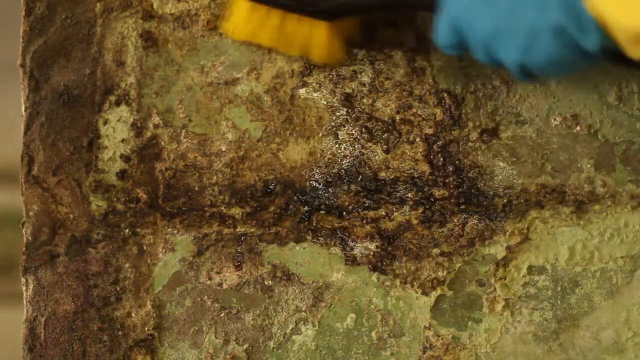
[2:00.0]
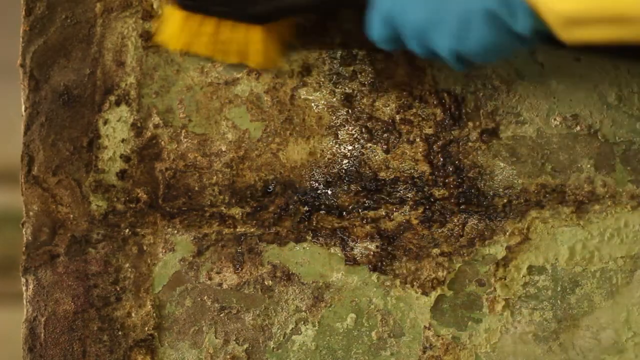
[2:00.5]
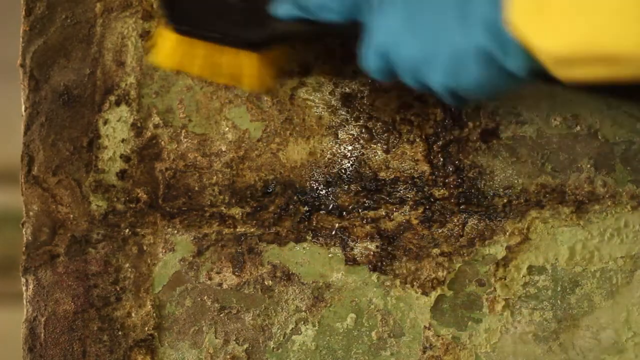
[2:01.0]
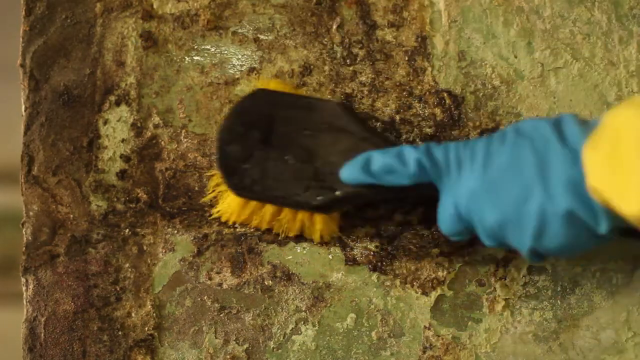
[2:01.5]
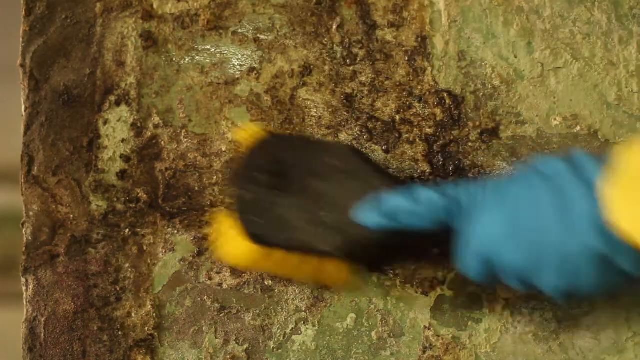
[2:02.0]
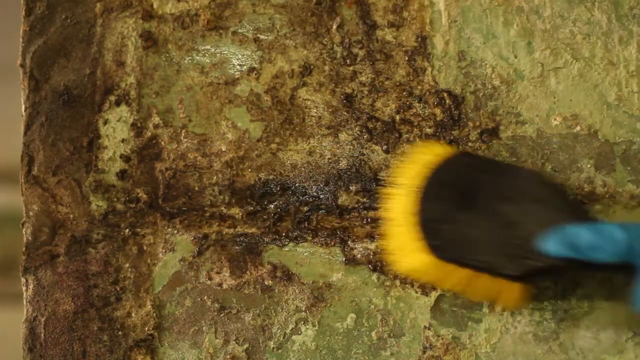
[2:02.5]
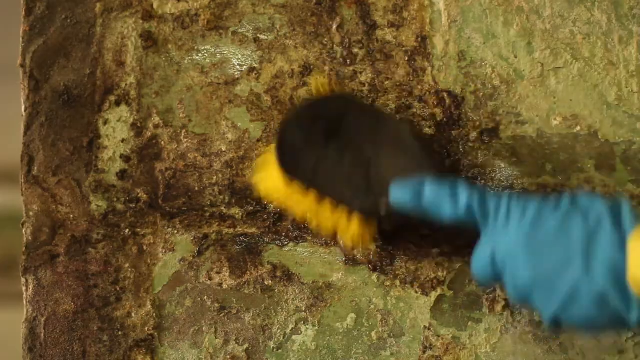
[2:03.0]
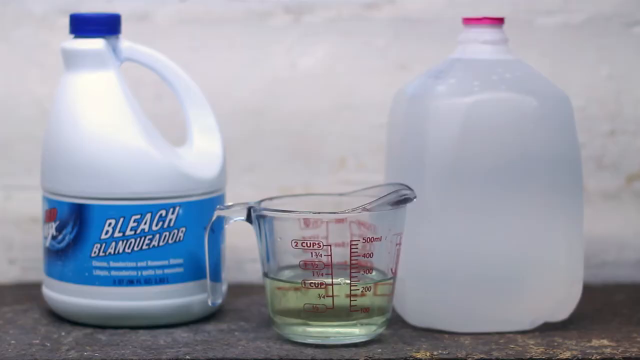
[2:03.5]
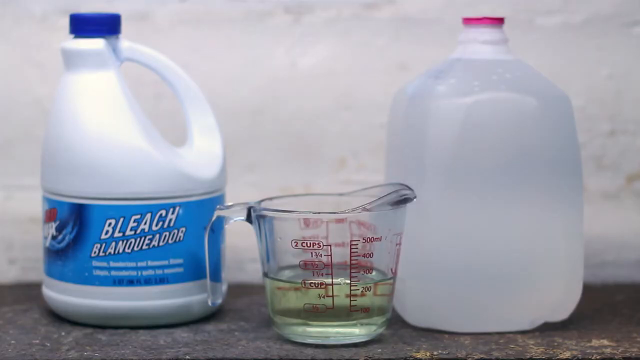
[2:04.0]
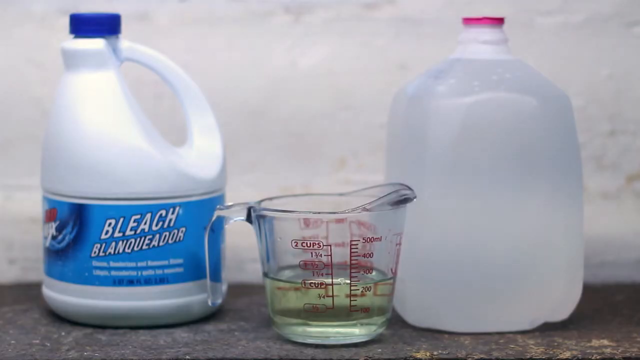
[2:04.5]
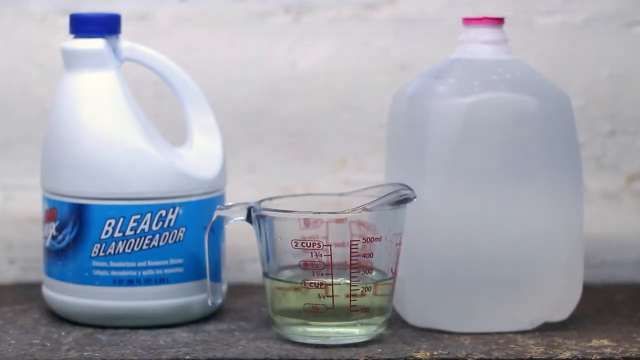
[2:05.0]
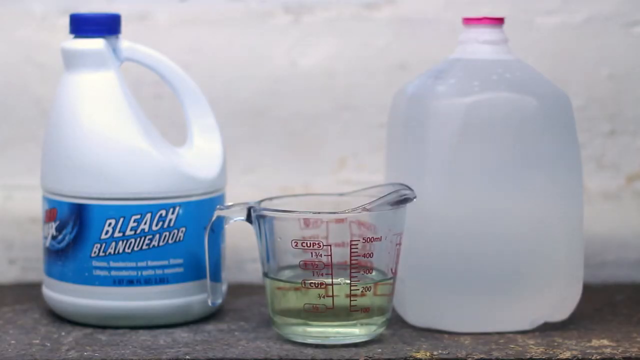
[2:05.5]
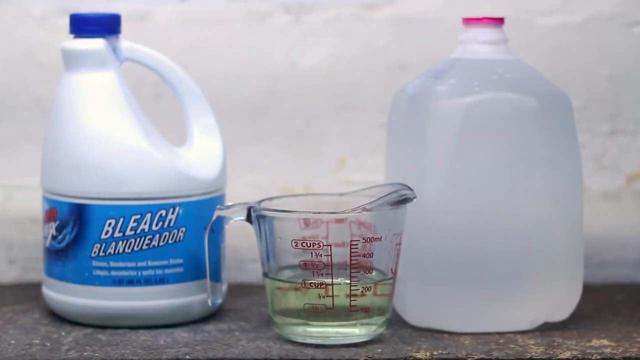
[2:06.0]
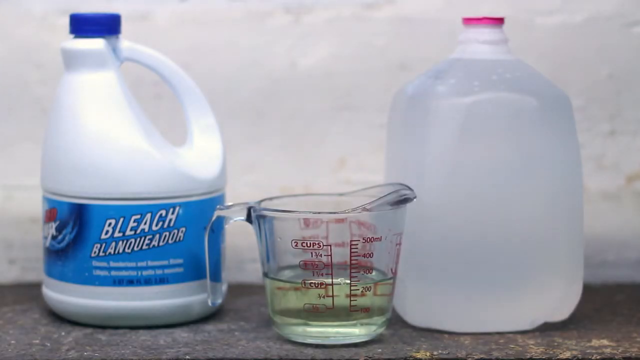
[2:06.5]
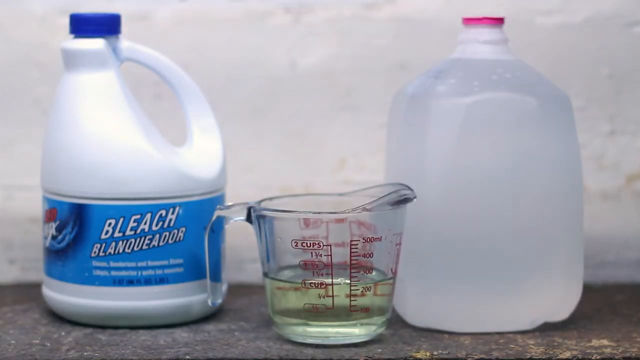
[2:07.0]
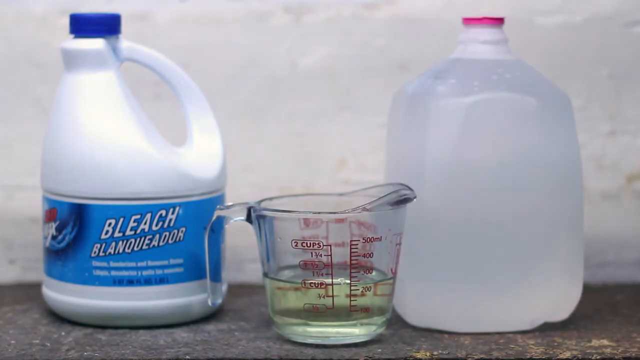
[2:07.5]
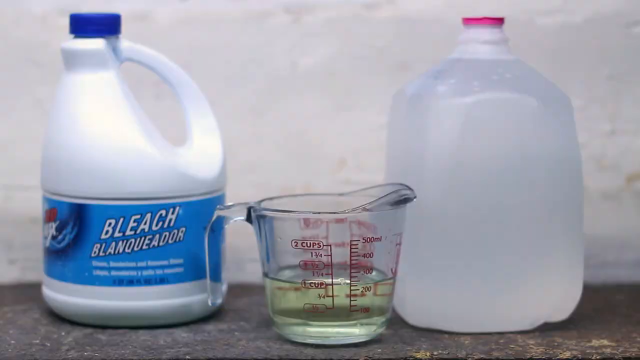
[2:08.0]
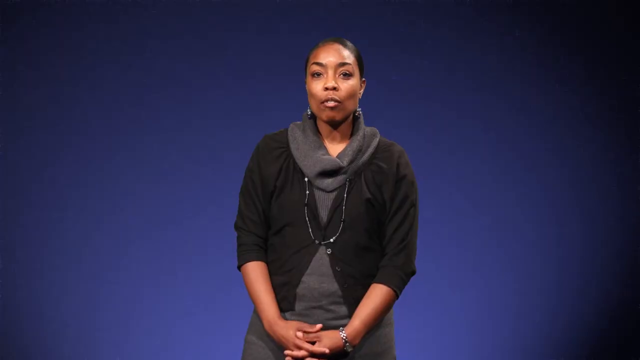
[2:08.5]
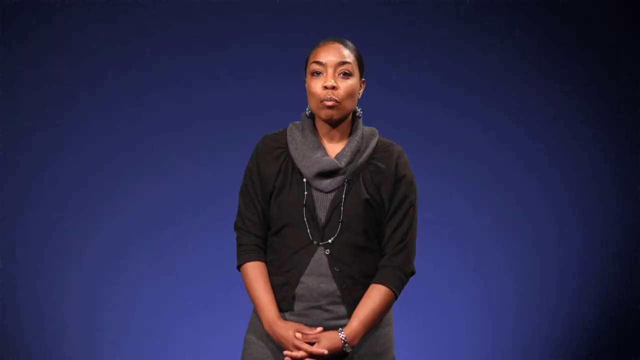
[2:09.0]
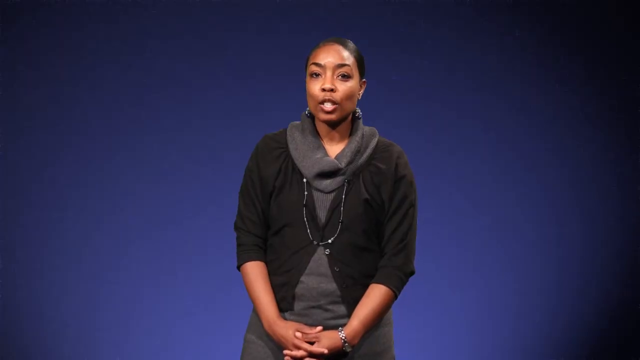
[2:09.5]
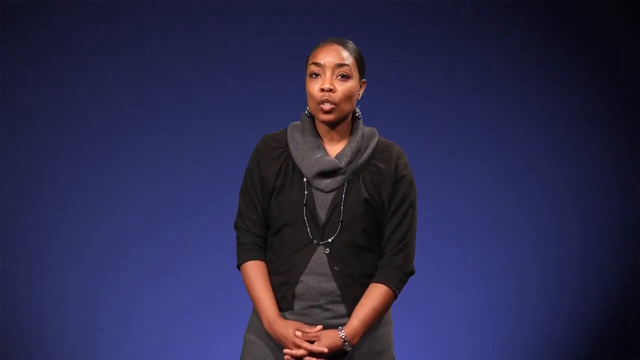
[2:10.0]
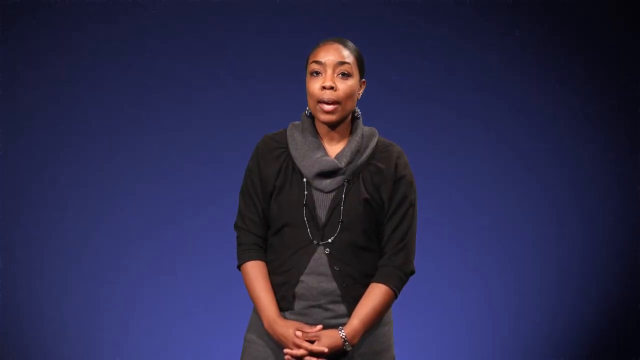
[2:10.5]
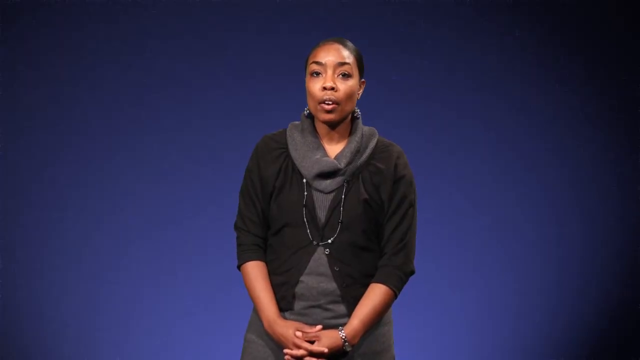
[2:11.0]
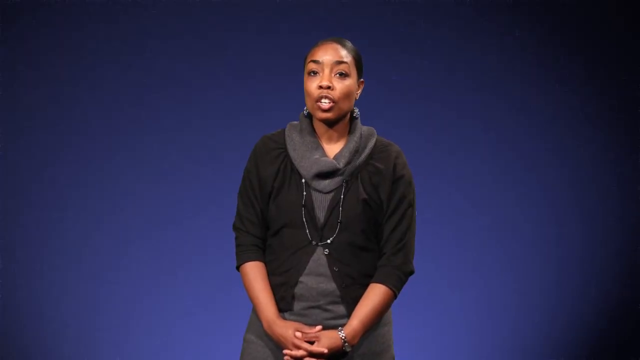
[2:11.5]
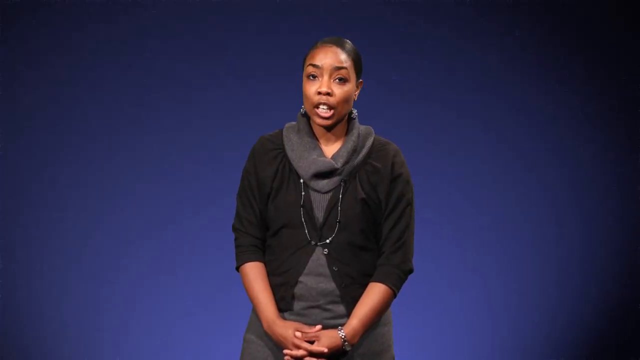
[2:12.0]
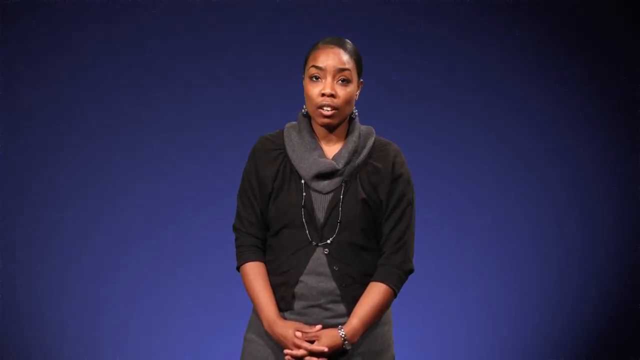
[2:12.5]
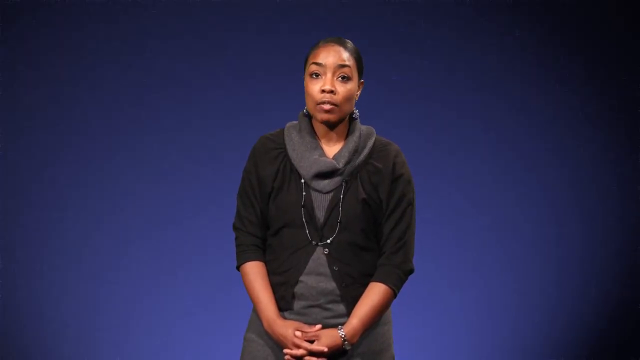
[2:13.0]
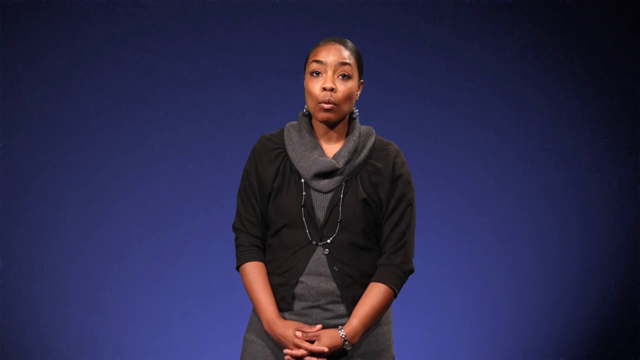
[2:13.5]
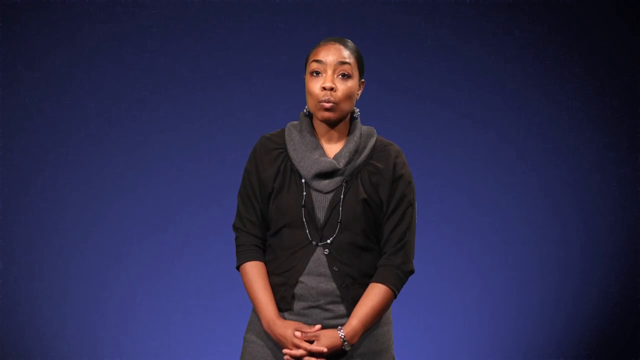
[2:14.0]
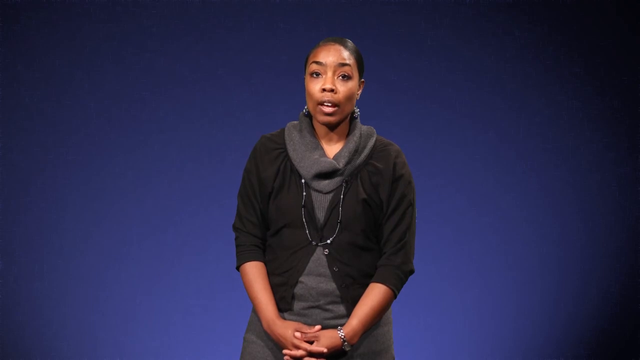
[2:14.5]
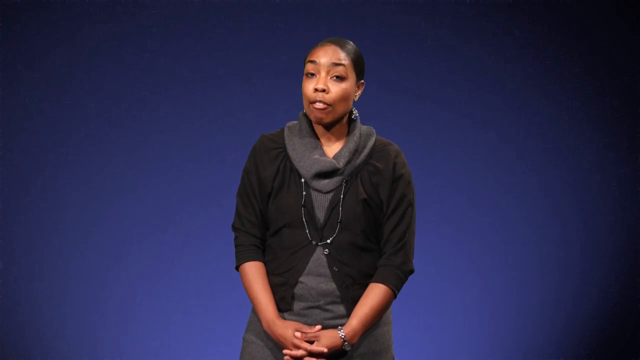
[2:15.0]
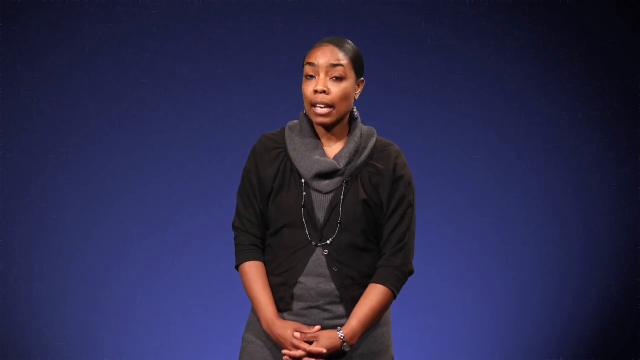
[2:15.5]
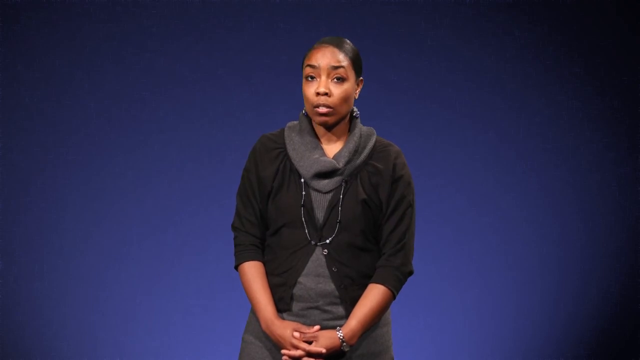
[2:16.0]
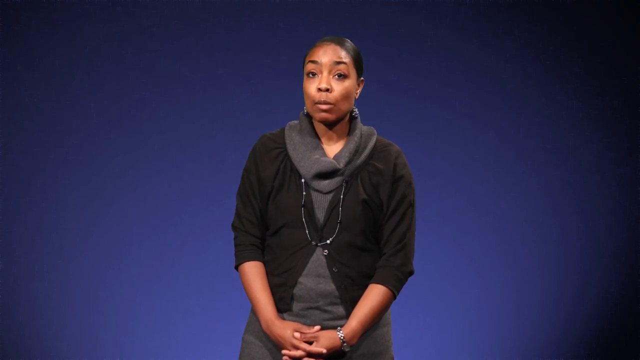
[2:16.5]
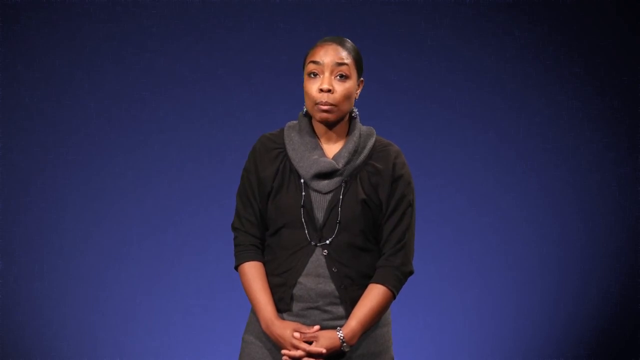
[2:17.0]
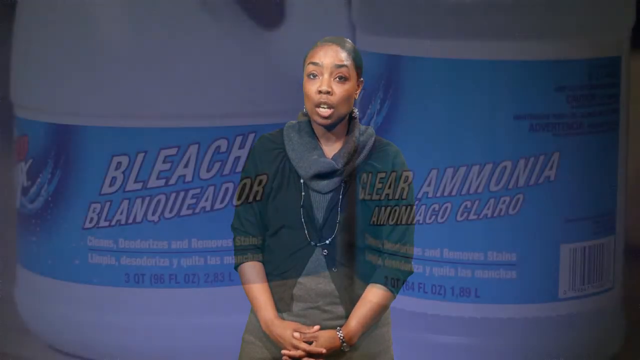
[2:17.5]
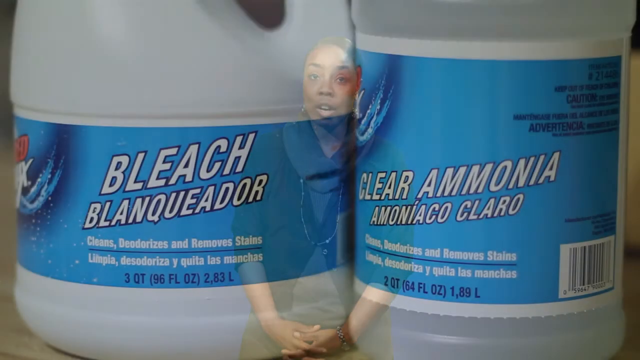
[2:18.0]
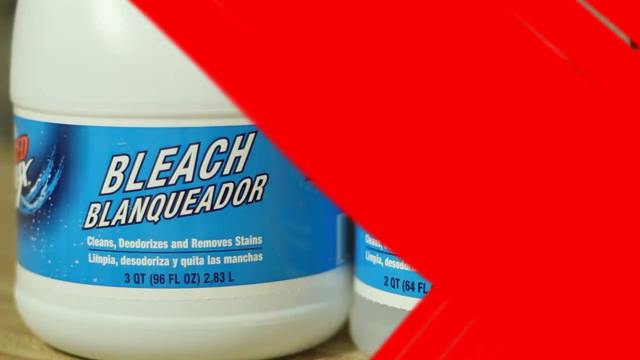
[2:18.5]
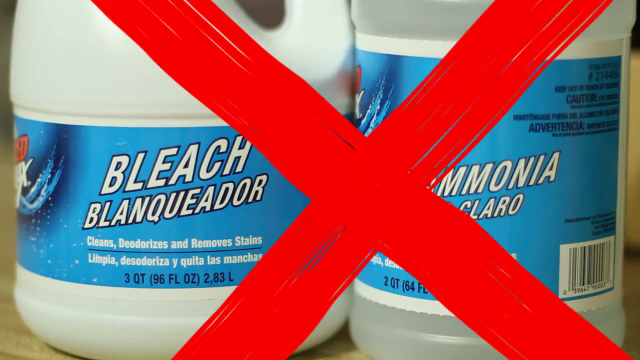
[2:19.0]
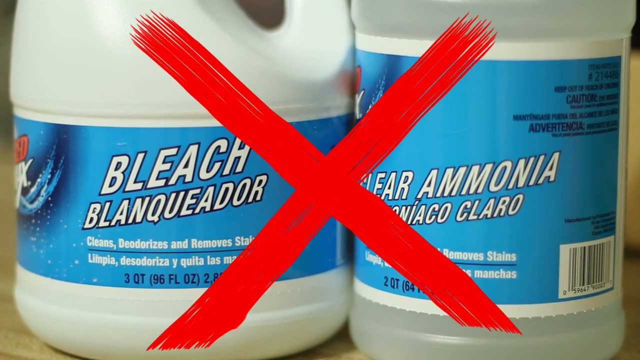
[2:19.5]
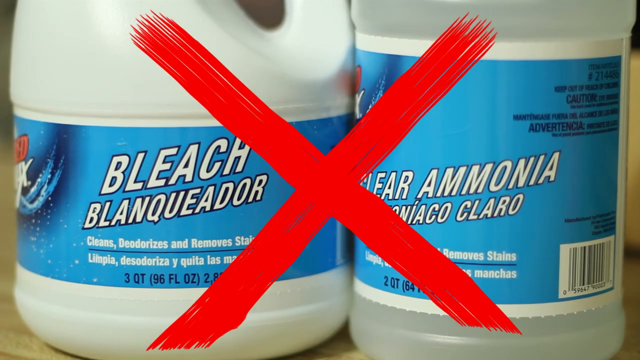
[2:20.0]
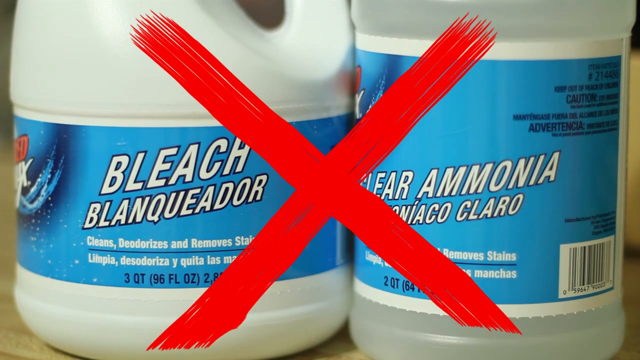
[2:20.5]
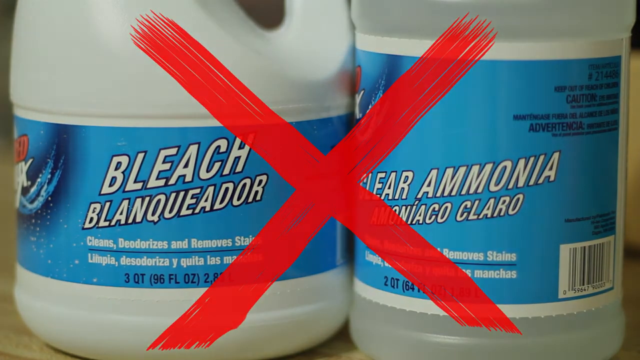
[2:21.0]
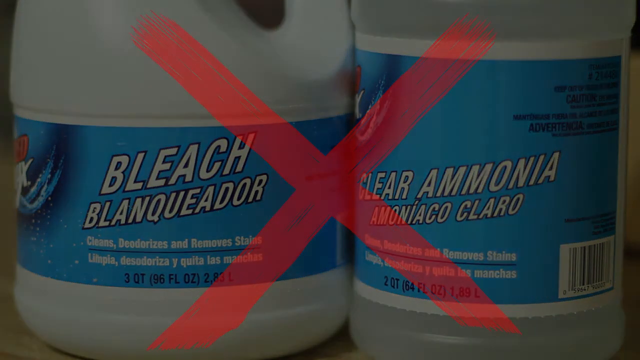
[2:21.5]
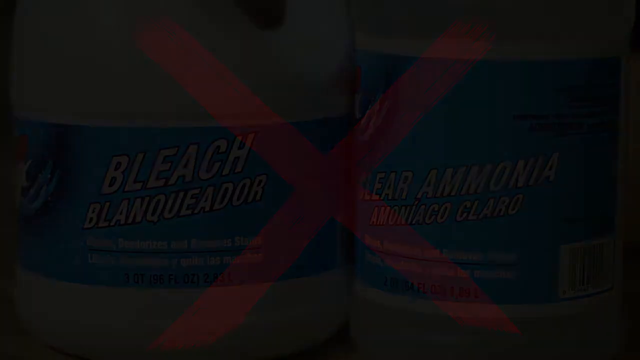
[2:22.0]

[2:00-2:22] Someone scrubs a brush all over the middle of a grayish green wall, wearing a blue glove on their hand. The brush has a black plastic or rubber base and yellow nylon bristles, and it looks like it is removing some kind of lime or scum buildup. The video cuts to a jug of bleach that also says "Blancador", with a blue cap. In the middle is a measuring cup half full of an oily-looking liquid with a slight yellow hue, and to the right is another jug with no label at all and a pink cap, which looks like it could be distilled water. They are sitting on a stone countertop with a white wall behind them. Next, an African-American woman wearing a sweater and a necklace talks with a serious expression, seeming to educate the viewer about something. The video ends on a screen showing containers of bleach and ammonia right next to each other with a large red X over them, apparently warning never to combine bleach and ammonia.